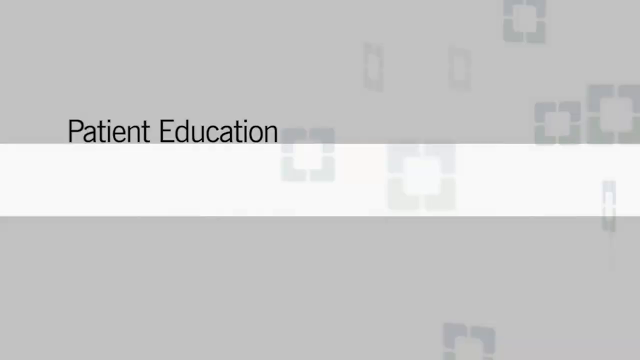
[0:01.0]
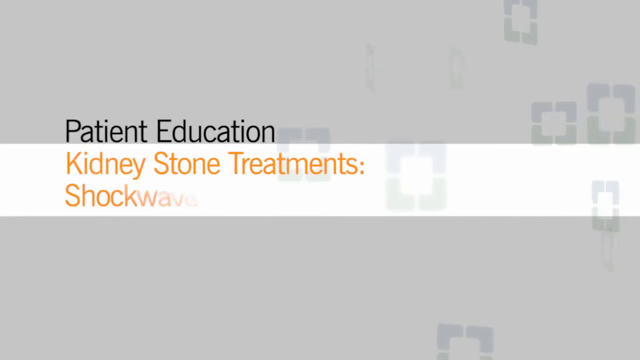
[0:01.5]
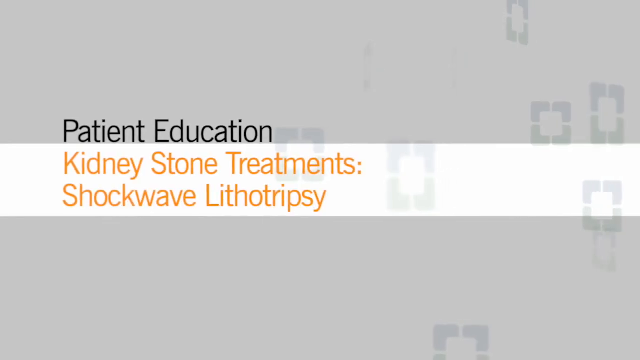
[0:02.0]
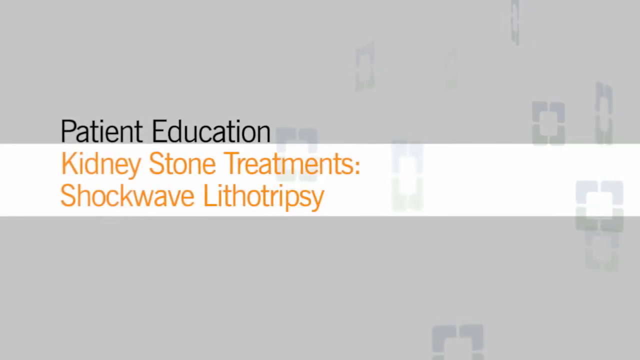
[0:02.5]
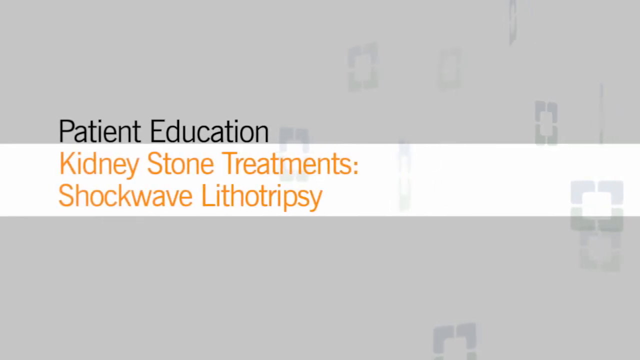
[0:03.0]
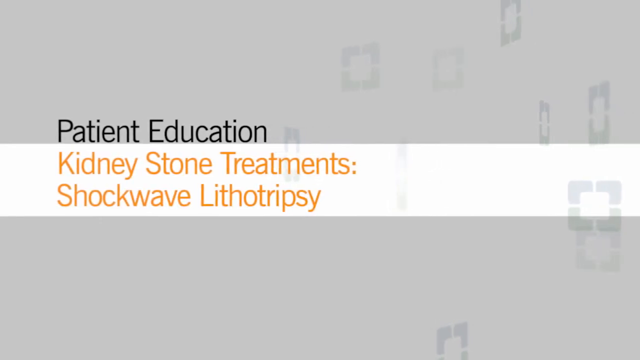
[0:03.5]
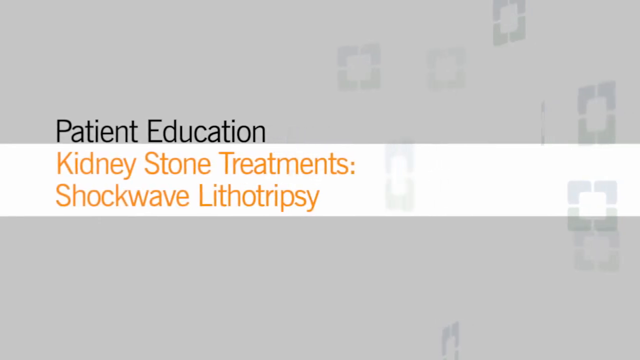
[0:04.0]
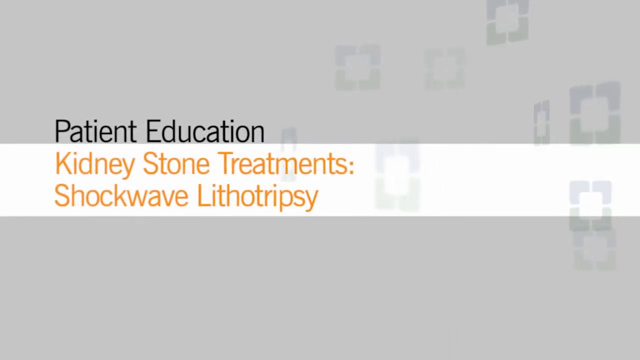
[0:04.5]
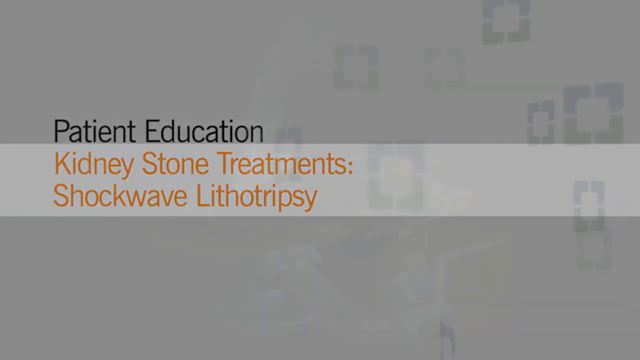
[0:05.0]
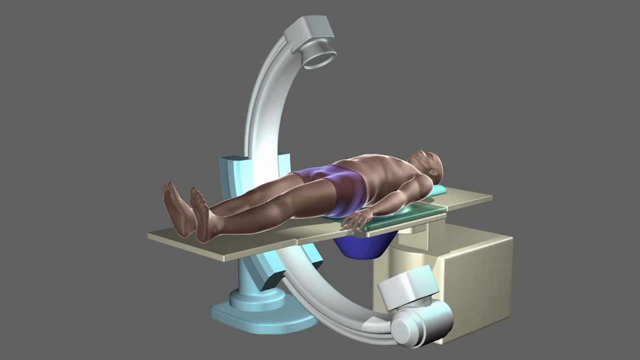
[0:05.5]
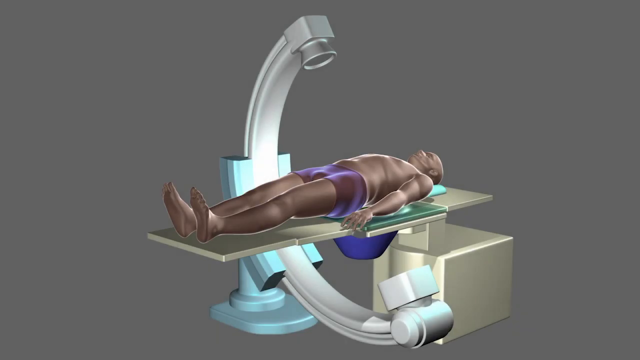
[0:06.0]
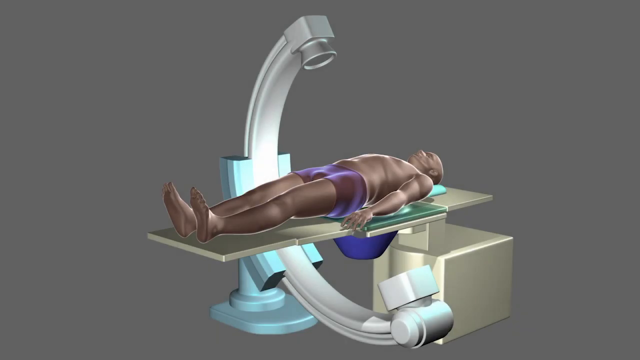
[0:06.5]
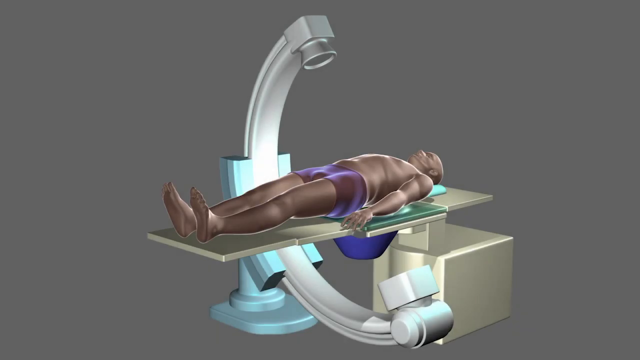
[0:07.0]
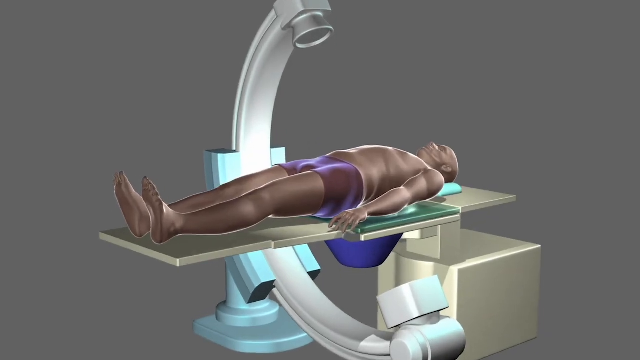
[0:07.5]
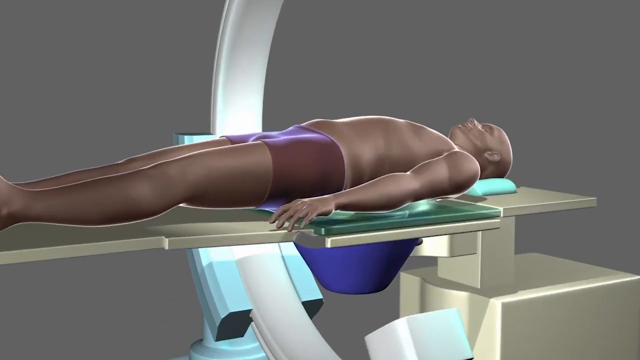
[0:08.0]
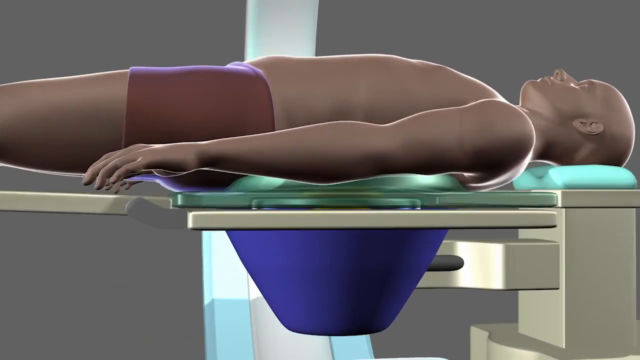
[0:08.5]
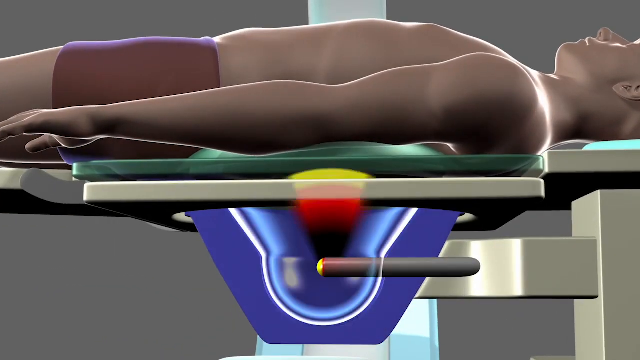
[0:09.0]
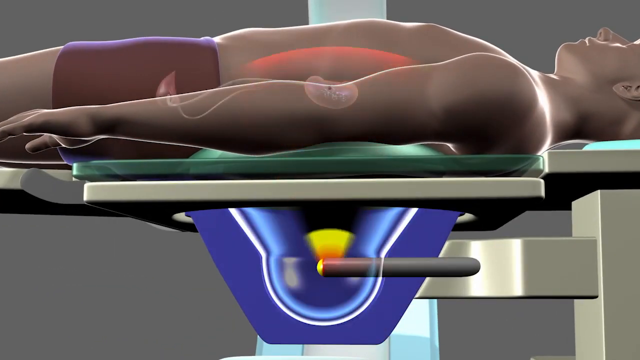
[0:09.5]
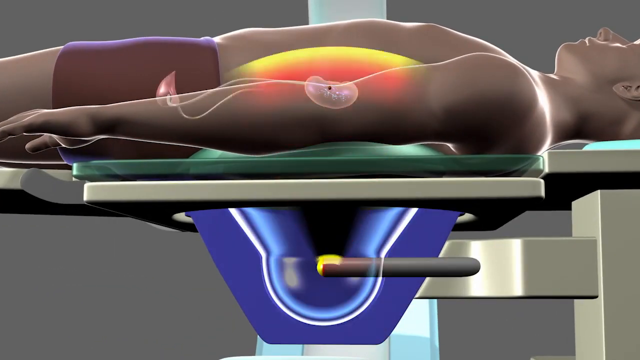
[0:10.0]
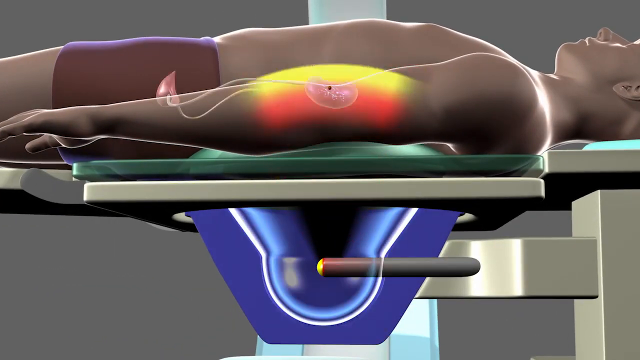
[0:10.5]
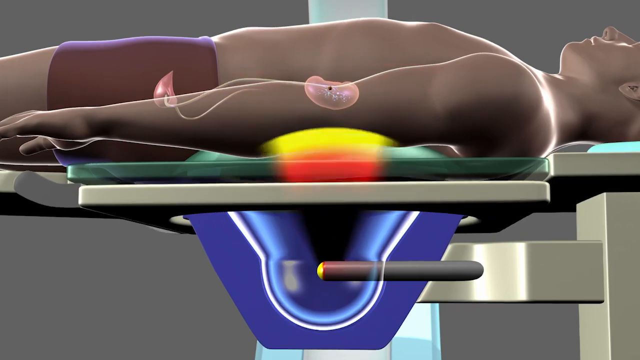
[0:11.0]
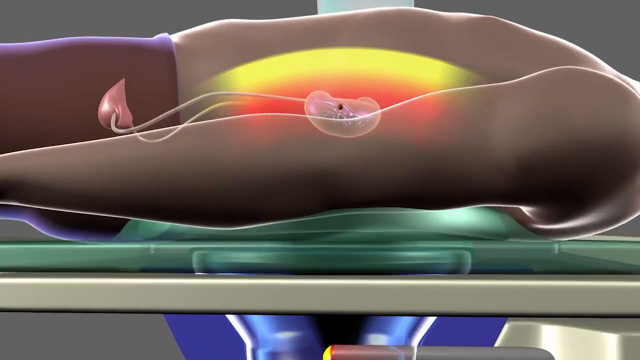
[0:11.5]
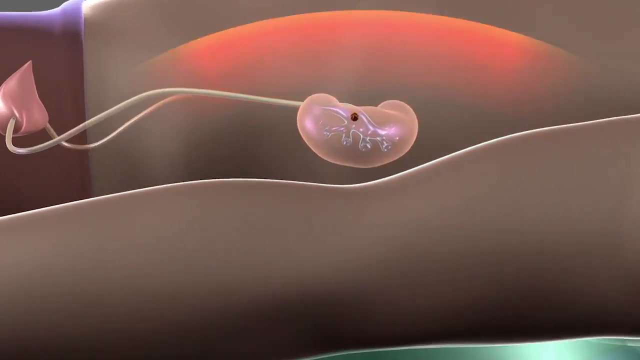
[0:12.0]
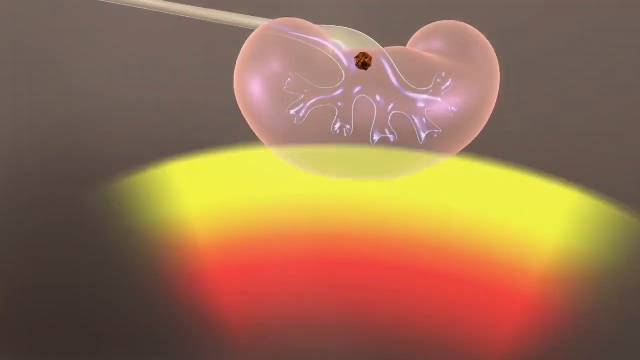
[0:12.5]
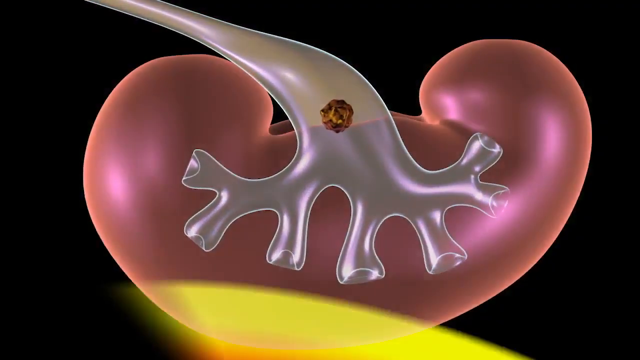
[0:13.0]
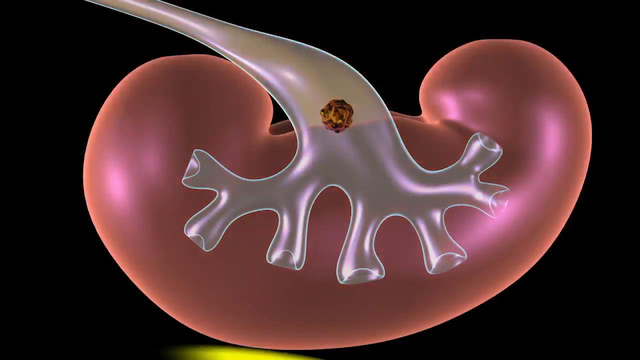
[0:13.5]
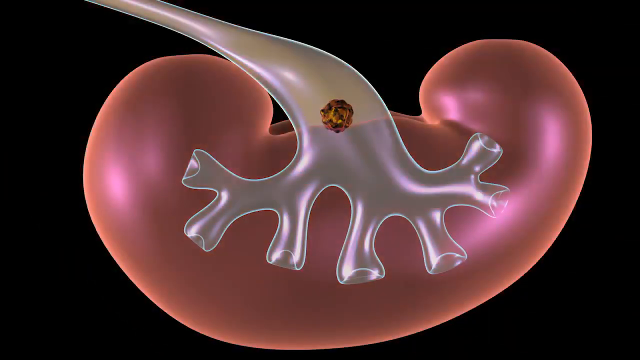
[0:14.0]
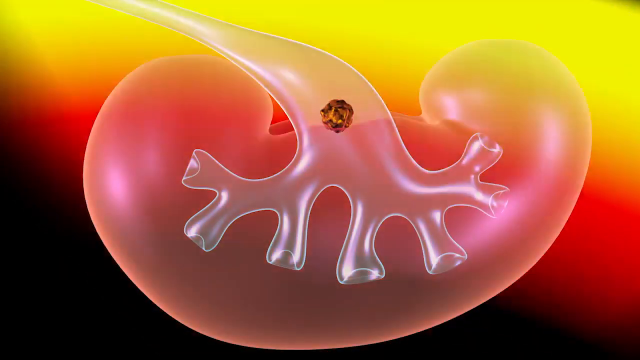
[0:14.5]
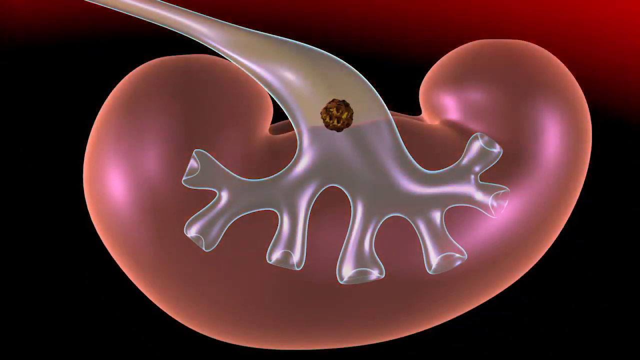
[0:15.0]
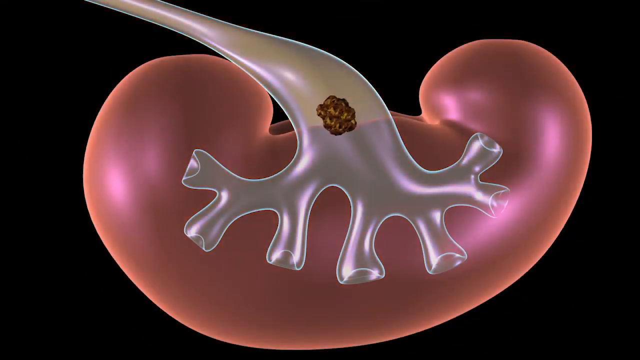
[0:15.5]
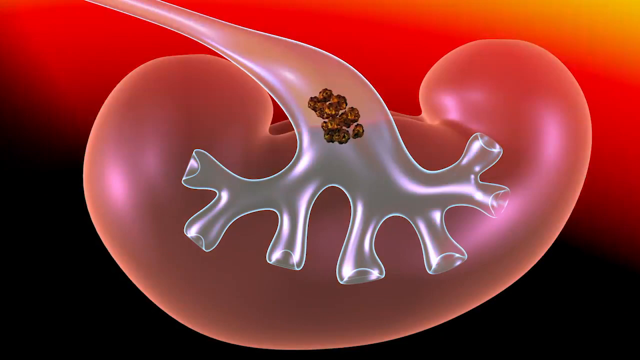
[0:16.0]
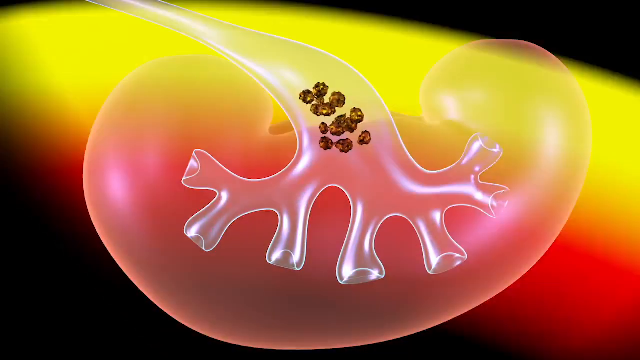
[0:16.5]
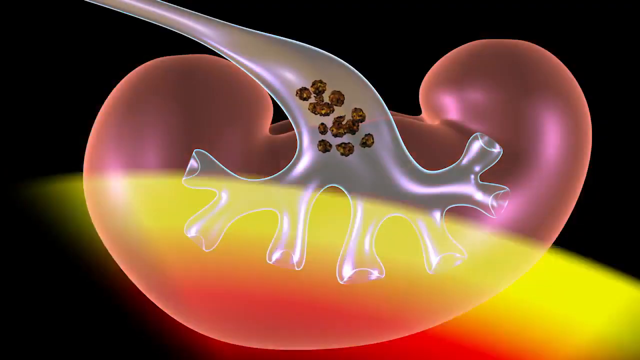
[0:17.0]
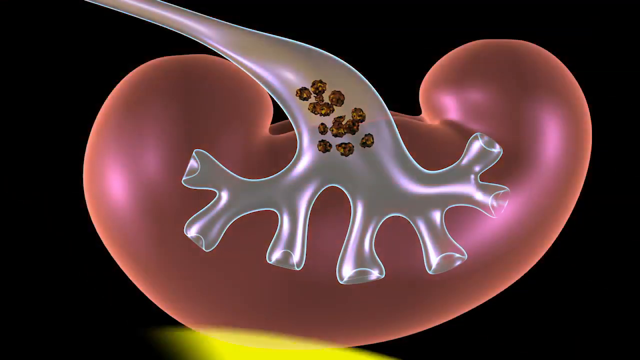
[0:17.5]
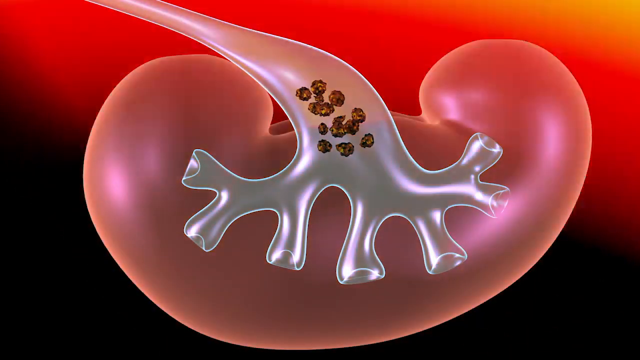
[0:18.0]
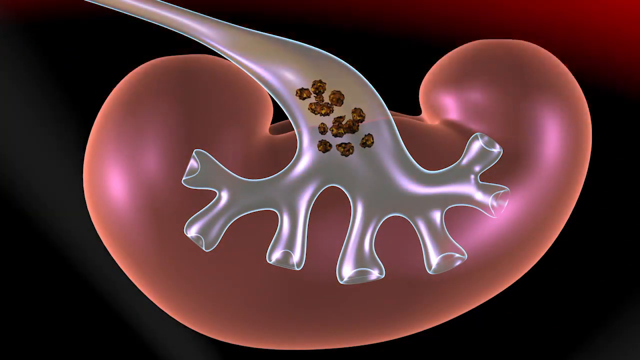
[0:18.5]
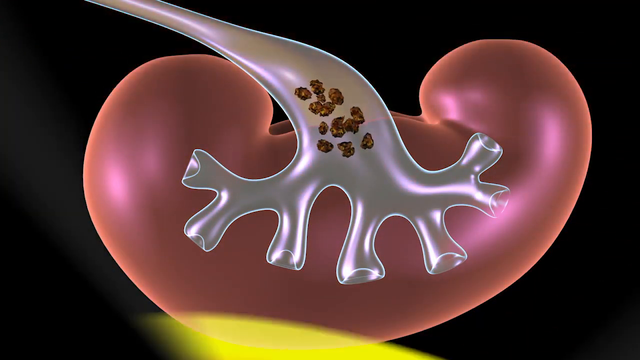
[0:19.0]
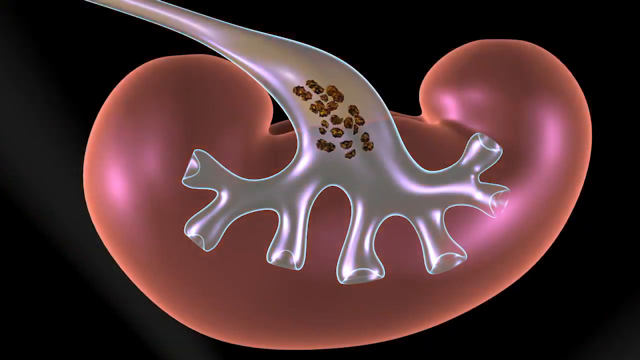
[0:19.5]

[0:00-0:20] The video opens with text reading "patient education, kidney stone treatments, shockwave, lithotripsy." A human body lies on the table of a device. The device has the table and an arch that goes all the way around and under the table, and at the top of the arch is a piece of stainless steel, a round tube, pointing directly at the body on the table. The body is a dummy rather than a real person, with a male human form. The view moves in close, showing waves shooting up from underneath the table to the figure's kidney, in red and yellow, and then stones forming inside the kidney.